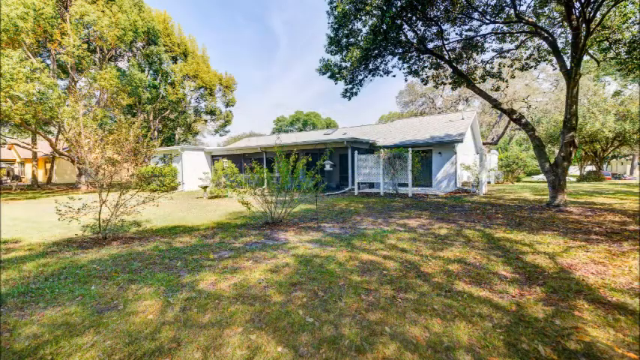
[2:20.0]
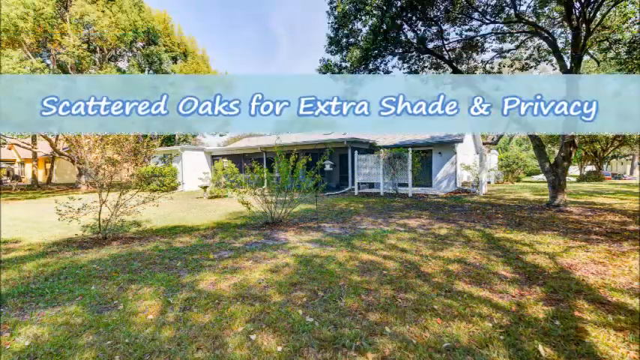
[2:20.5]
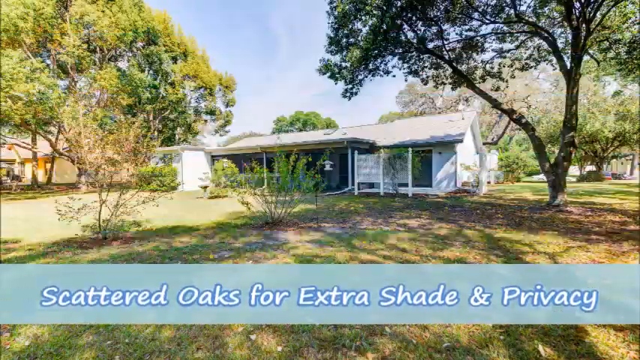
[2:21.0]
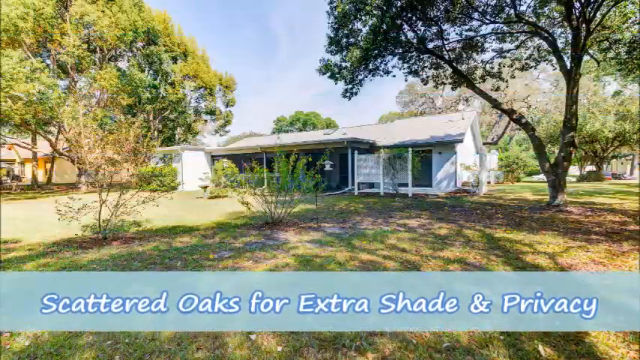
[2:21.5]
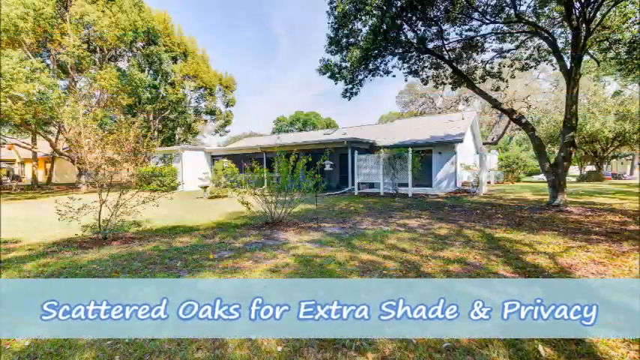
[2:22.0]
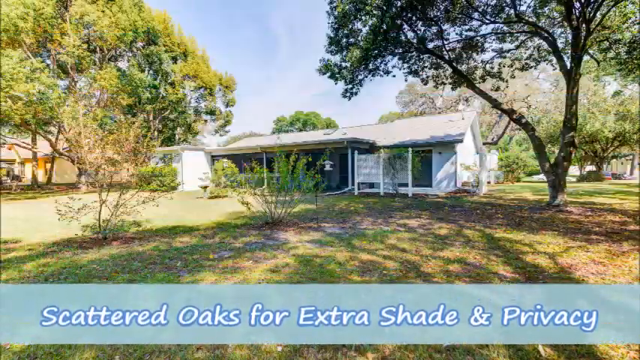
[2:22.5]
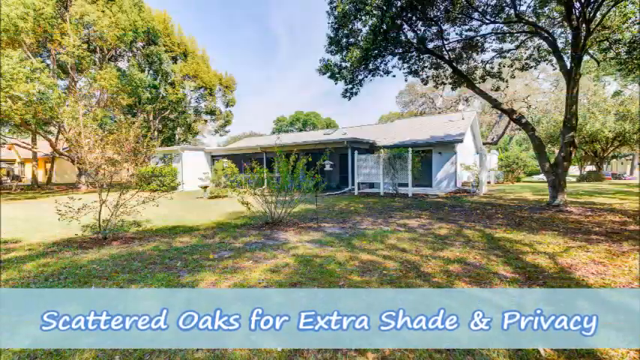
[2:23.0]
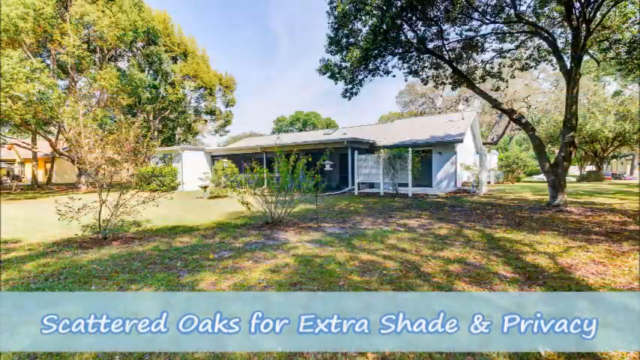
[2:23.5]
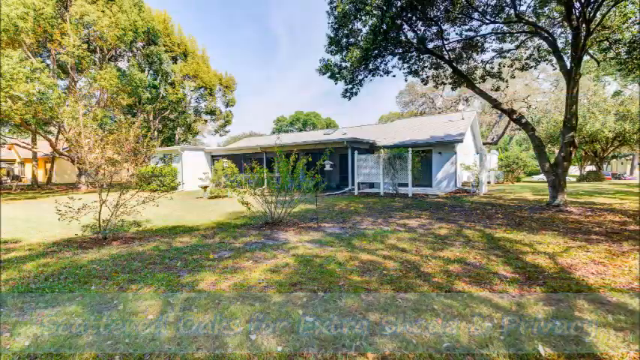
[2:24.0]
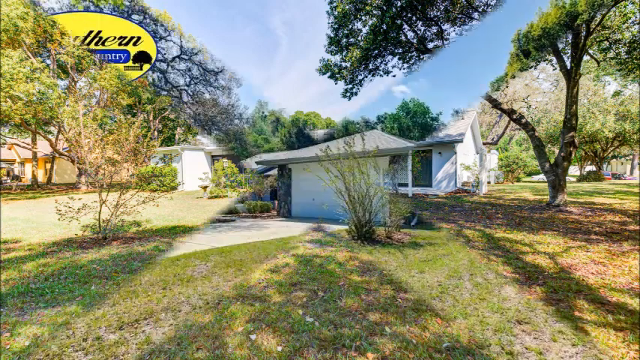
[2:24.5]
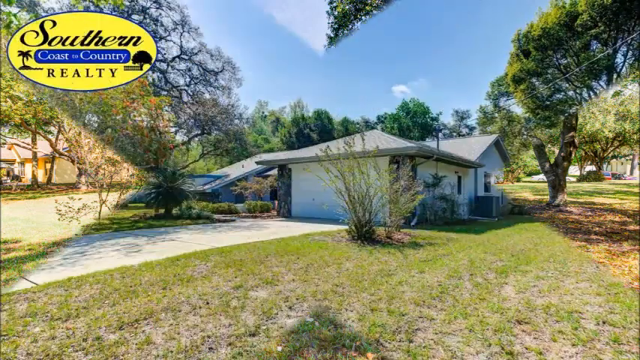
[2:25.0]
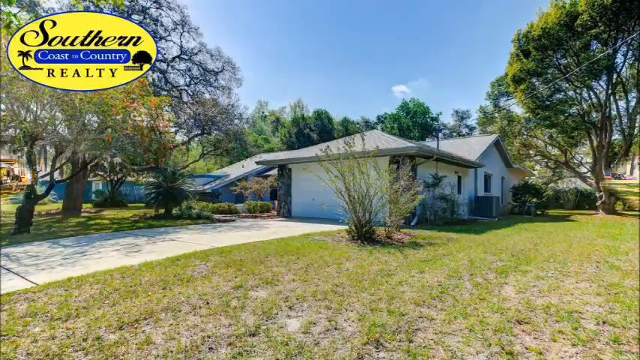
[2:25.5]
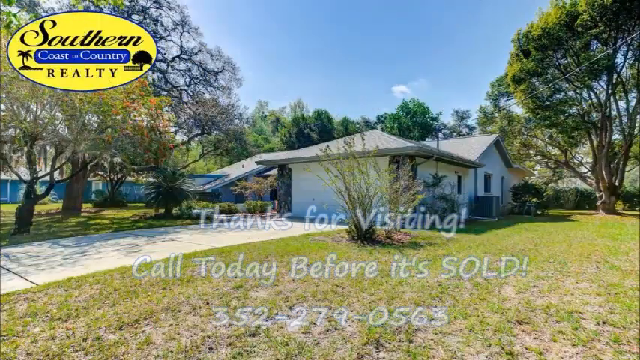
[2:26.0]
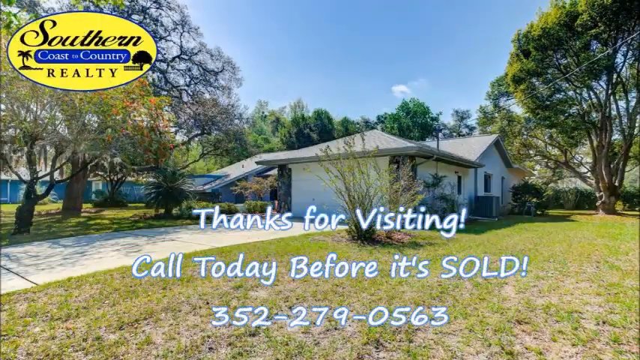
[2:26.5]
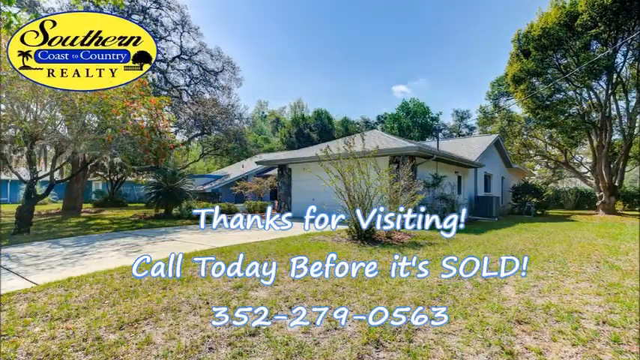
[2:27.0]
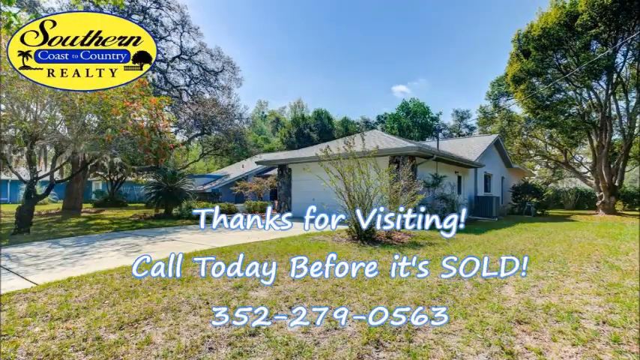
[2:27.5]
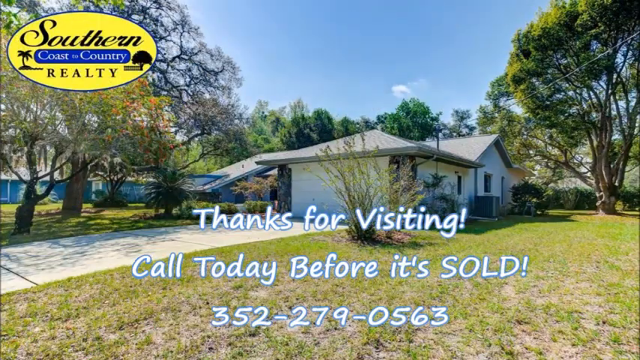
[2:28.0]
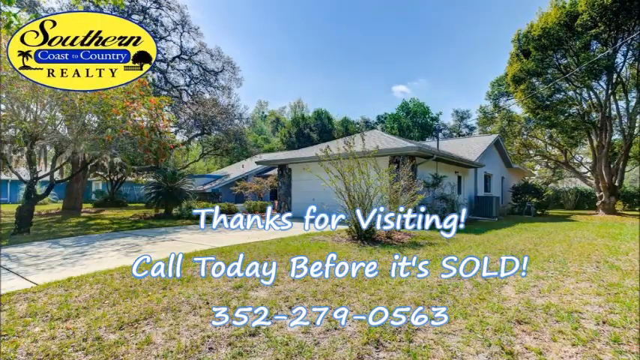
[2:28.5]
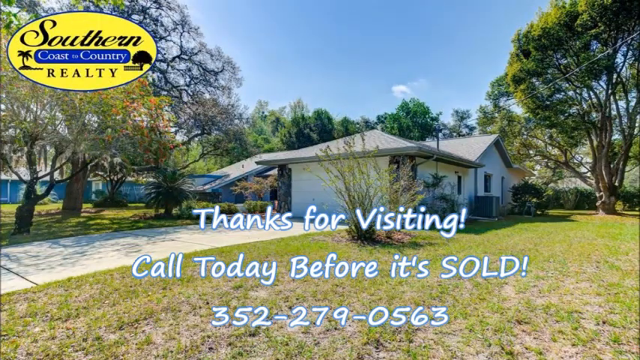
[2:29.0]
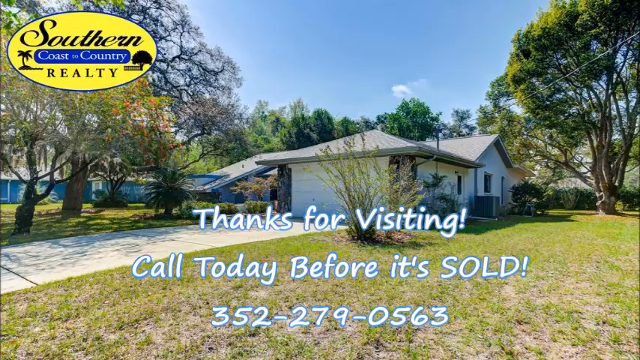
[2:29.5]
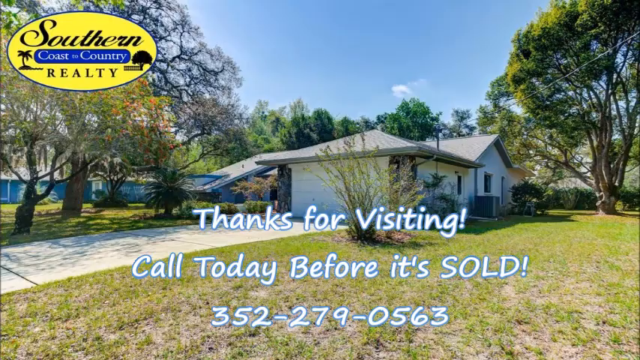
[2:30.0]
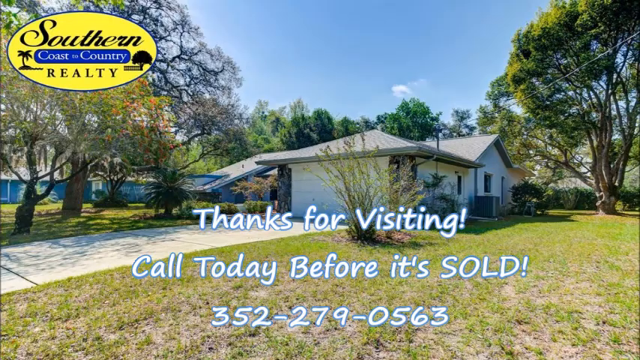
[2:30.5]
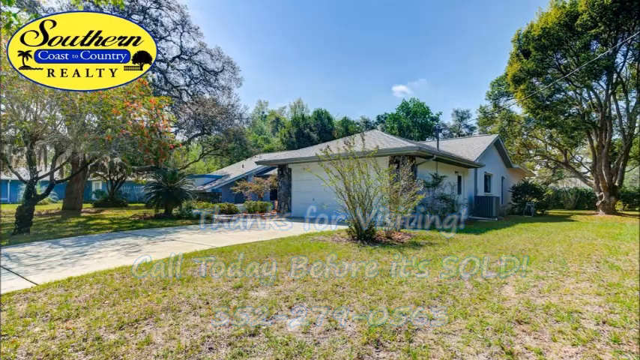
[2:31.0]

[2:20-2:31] The view stays stationary on the very front of the house for quite a few seconds, then pans to a screen with "Southern Coast to Country Realty" in the top left-hand corner, with a little palm tree to the left and a larger tree to the right. Text at the bottom of the screen, overlaid on the house, reads "thanks for visiting call today before it's sold," followed by the phone number "352-279-0563." Behind the text, the house has some very established trees in front of it and to the side toward the back, along with some other small landscaping details. There looks to be a central air conditioning unit to the side of the house. The house is generally white with some brick accents.